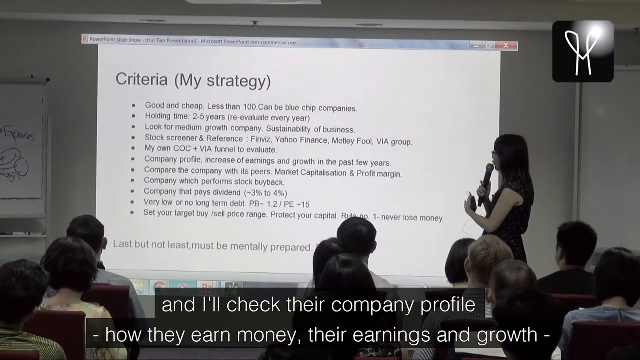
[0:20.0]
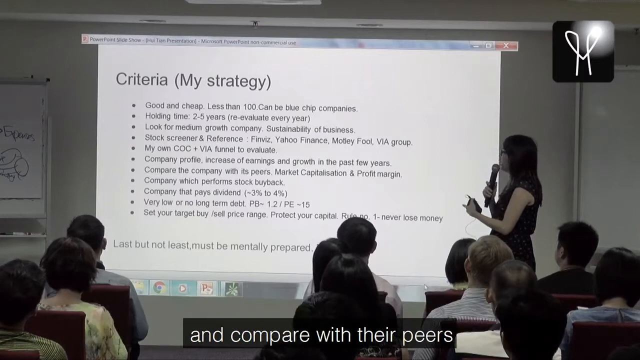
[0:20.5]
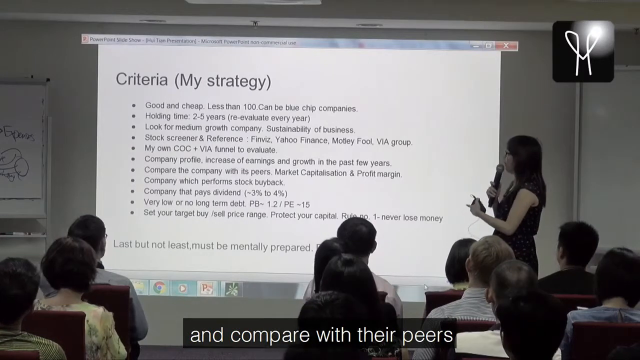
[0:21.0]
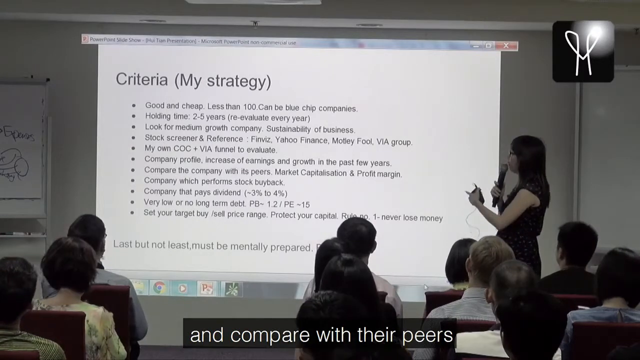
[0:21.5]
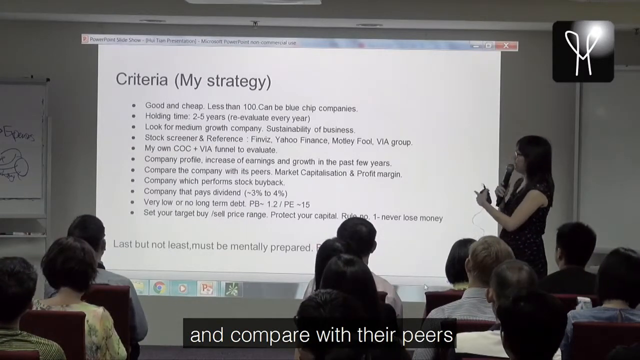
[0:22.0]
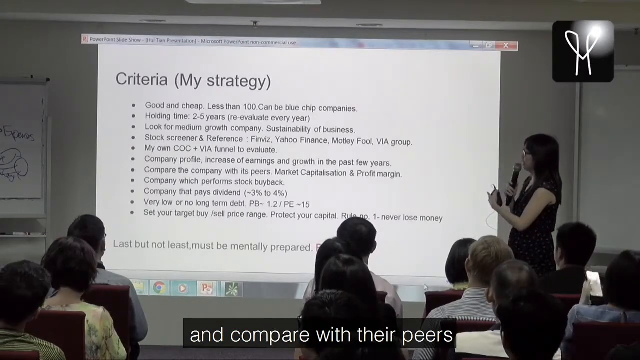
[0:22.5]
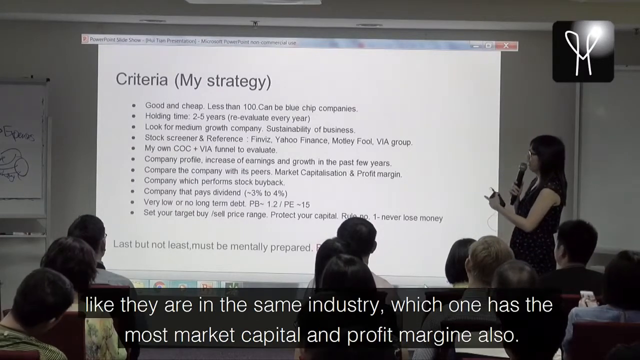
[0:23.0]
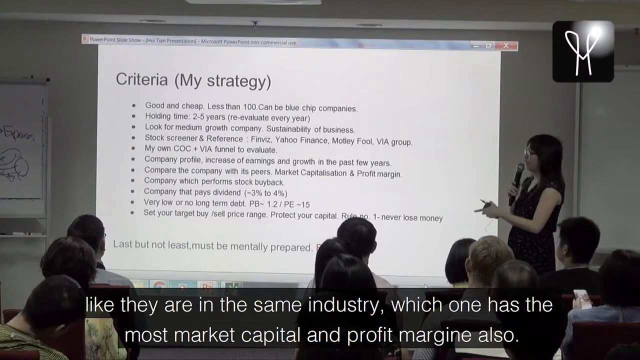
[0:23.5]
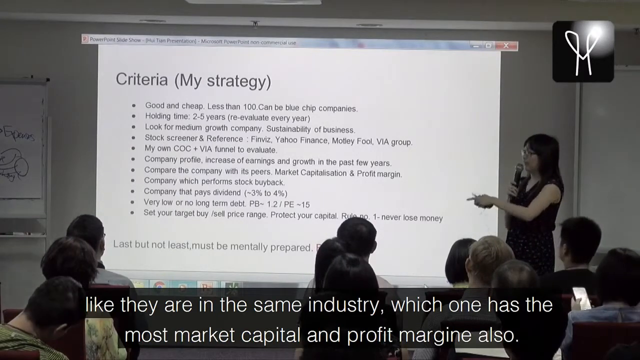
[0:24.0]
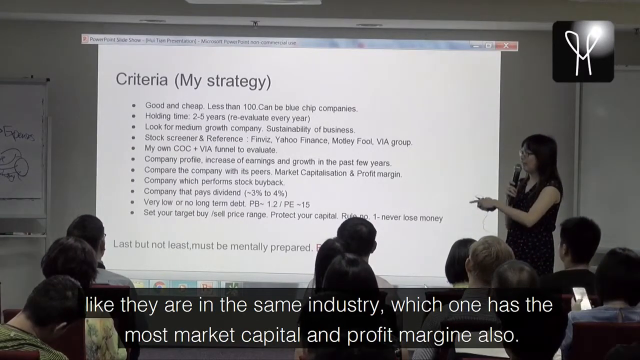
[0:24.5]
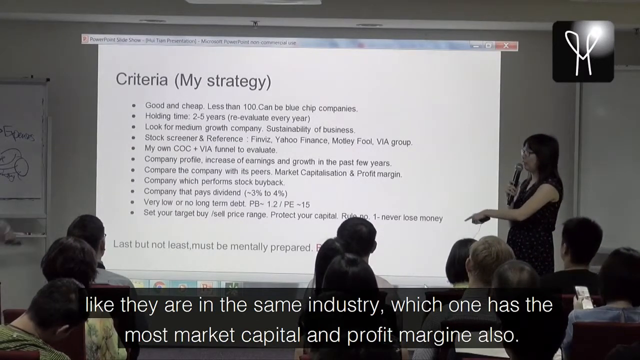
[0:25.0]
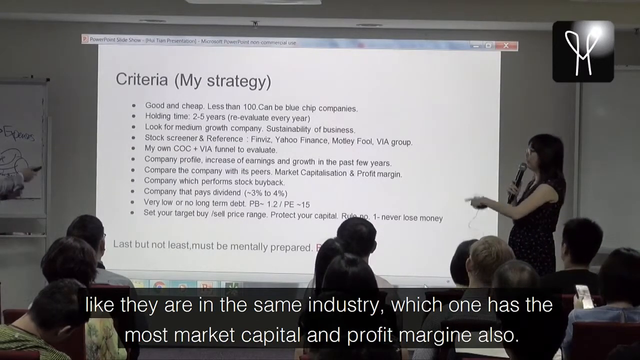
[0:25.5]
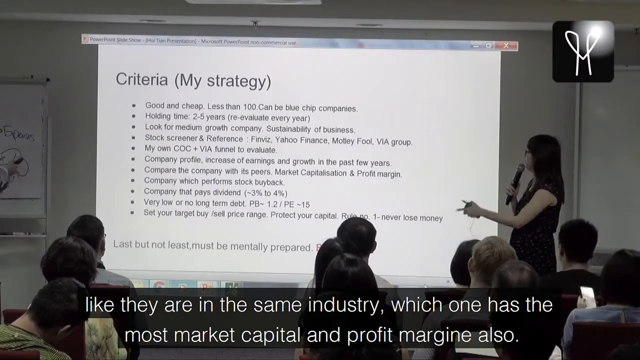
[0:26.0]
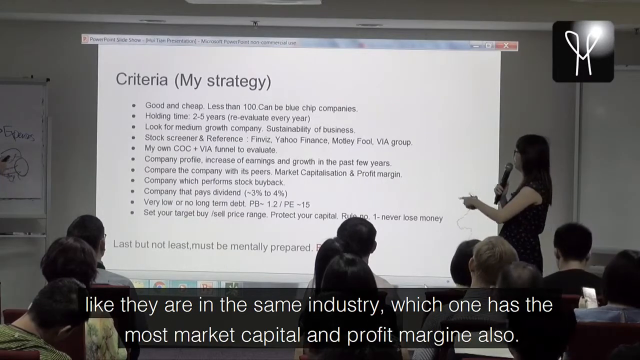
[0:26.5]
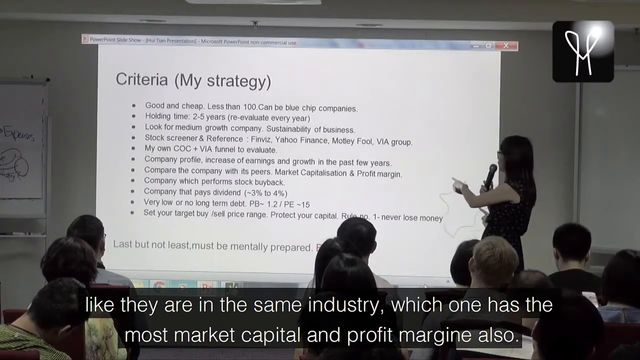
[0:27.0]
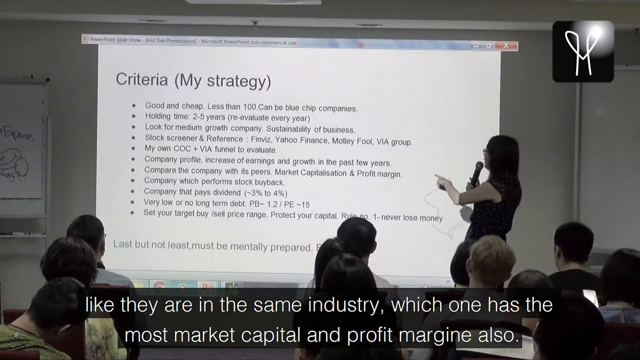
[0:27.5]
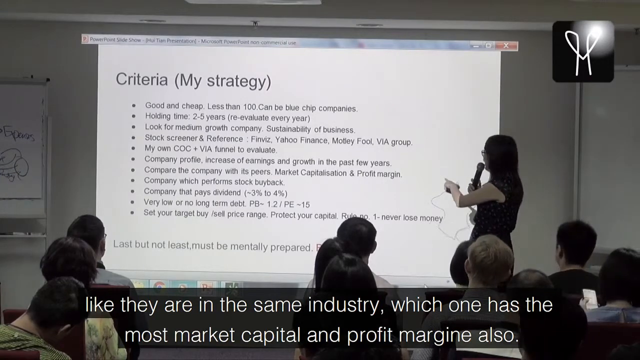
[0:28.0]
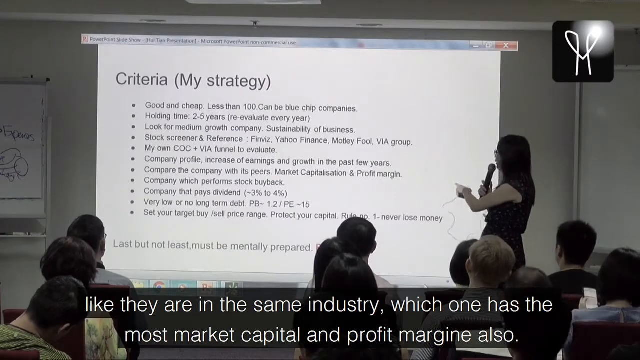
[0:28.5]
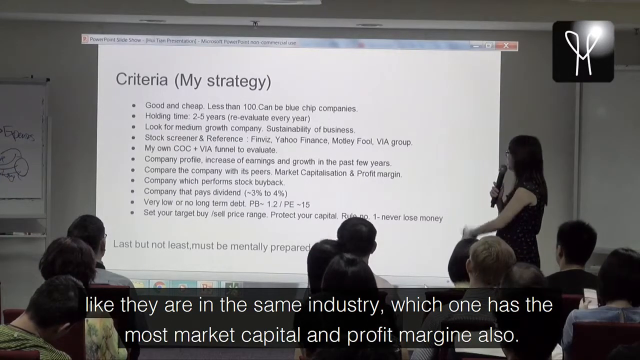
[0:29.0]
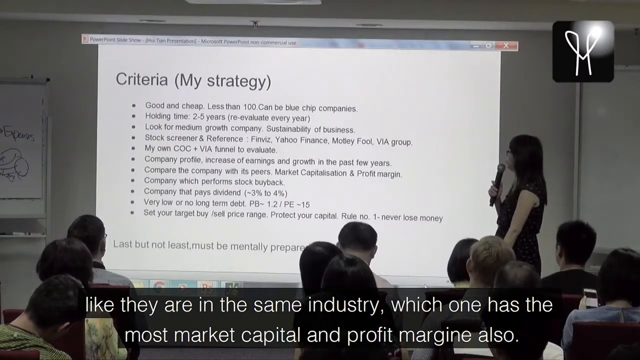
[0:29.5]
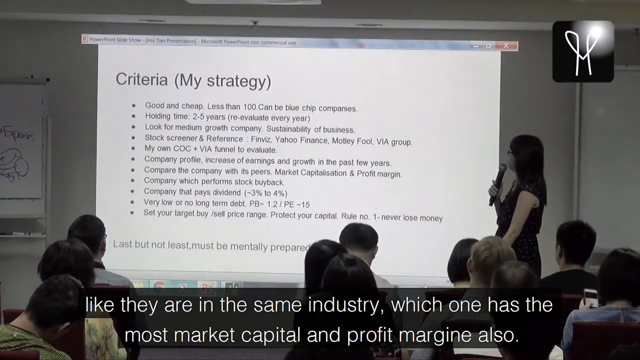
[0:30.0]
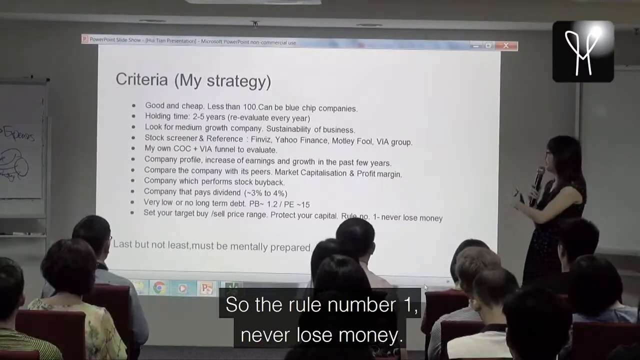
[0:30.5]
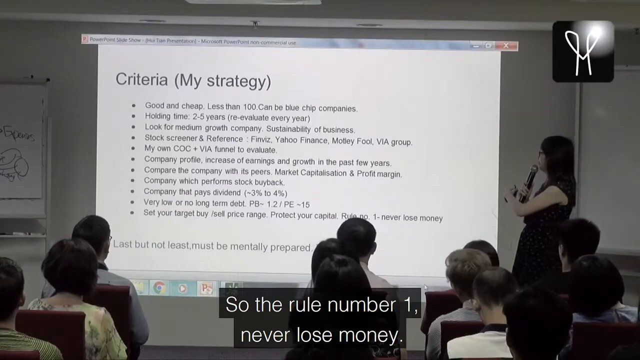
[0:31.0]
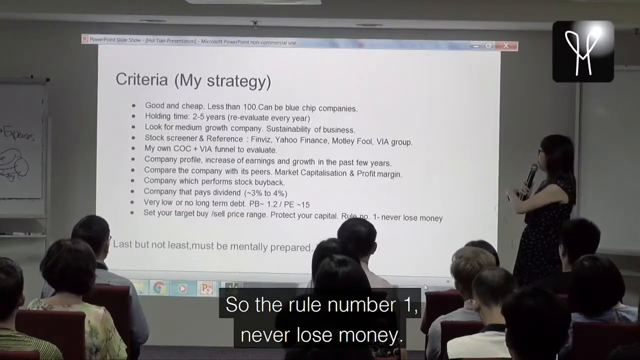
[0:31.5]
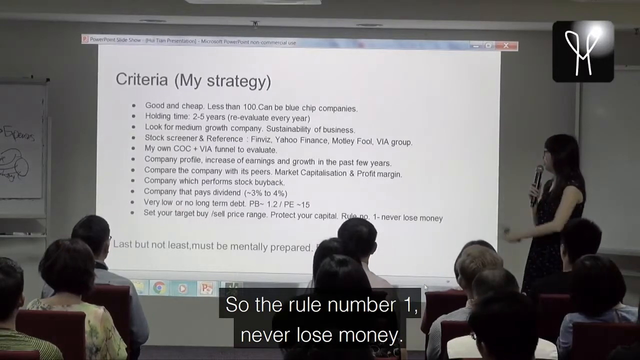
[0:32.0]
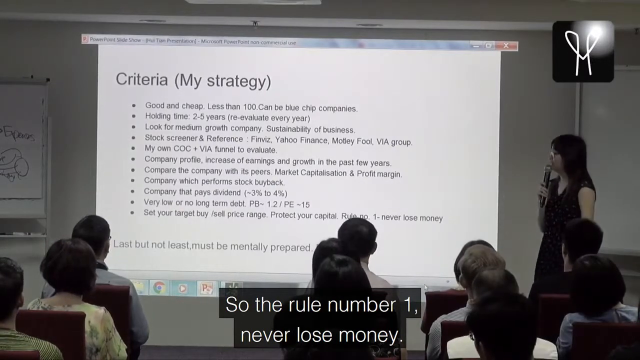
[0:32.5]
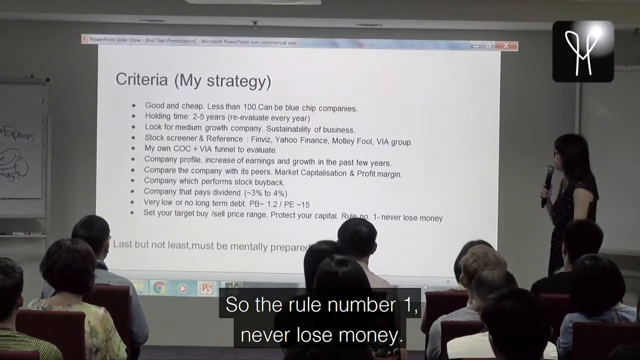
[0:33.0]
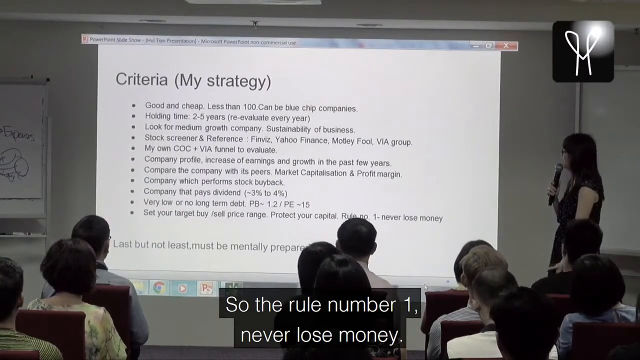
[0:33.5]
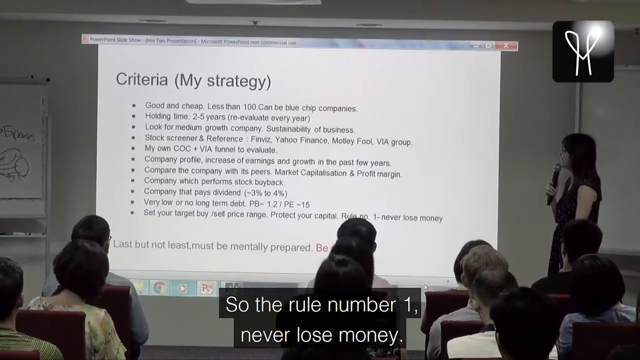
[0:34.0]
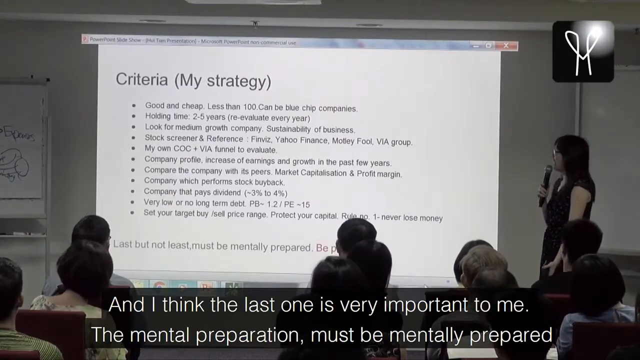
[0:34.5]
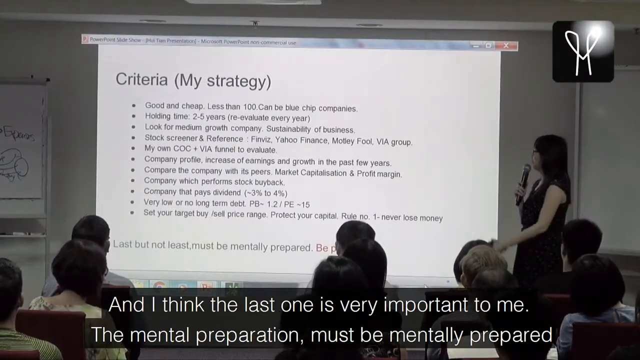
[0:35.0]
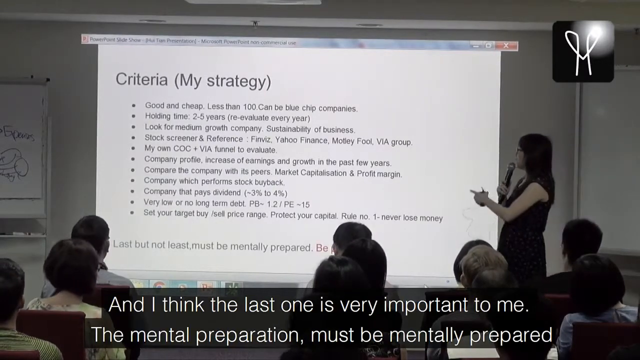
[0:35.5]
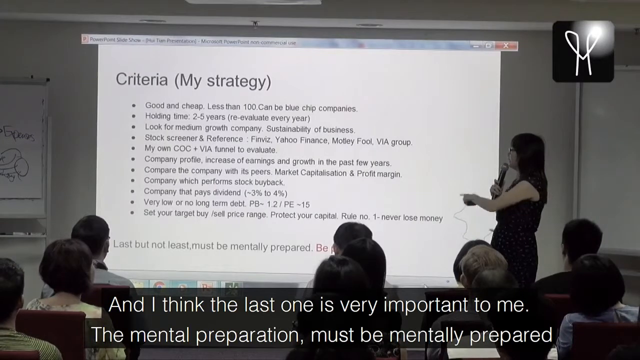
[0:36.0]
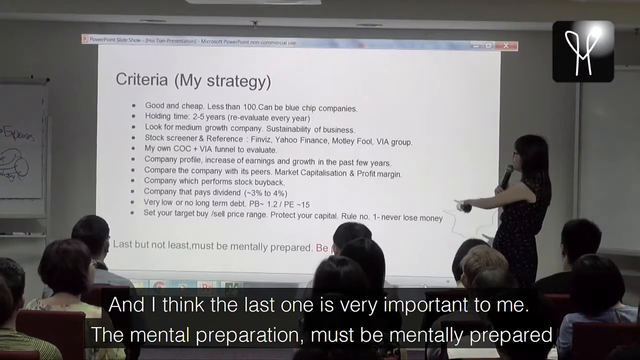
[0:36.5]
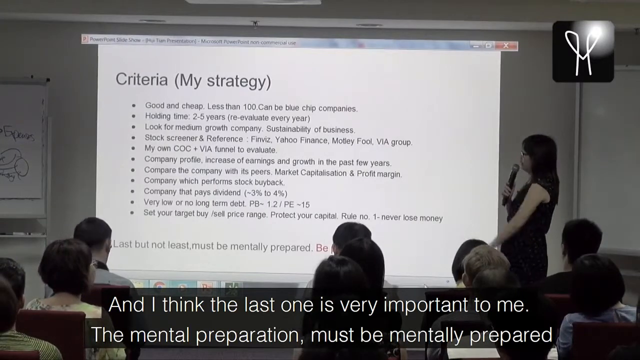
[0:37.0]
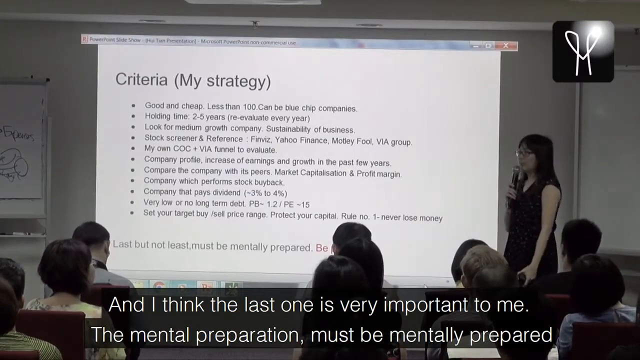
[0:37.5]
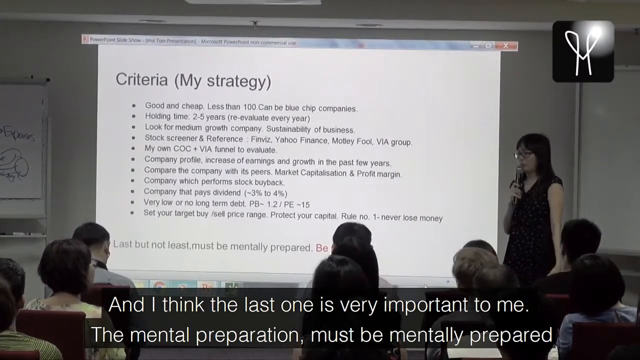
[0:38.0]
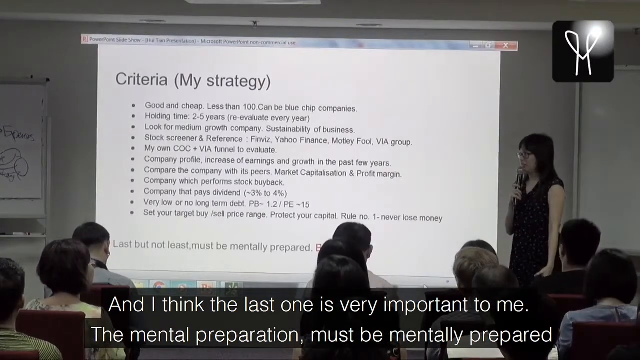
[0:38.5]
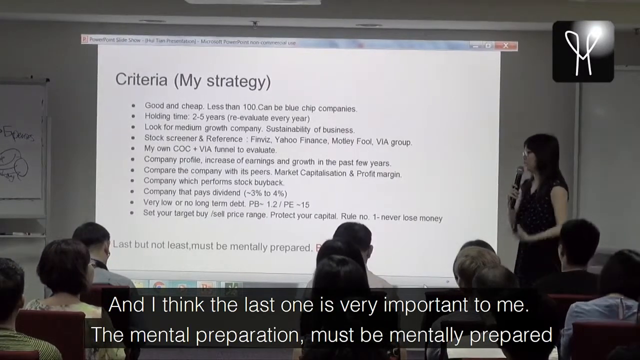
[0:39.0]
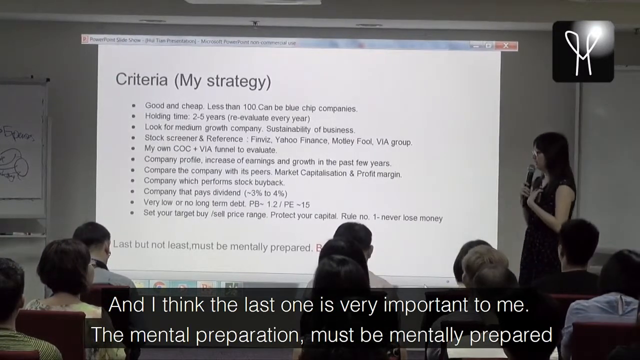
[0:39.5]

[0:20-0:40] The presenter continues. At first she is looking towards the presentation, then she rotates her body partially, so her right side is parallel to the wall and her left side is parallel to the audience. She seems to be signaling to someone, and on the left side of the video a hand appears that seems to be holding a remote control or something similar, though it is not clear. She keeps pointing at the presentation while speaking, and there are subtitles at the bottom that seem to explain what she is saying. The audience is mostly watching. A person in the middle of the second row moves her head to the right and to the left, apparently trying to read the presentation; otherwise there is only minor movement in the audience. A person in the bottom right corner seems to be recording the presentation with her cell phone, or at least using it for some purpose.